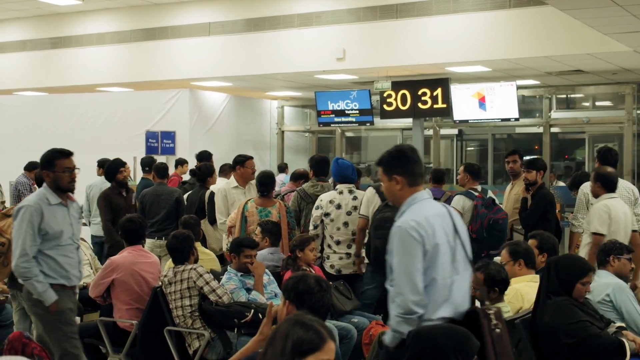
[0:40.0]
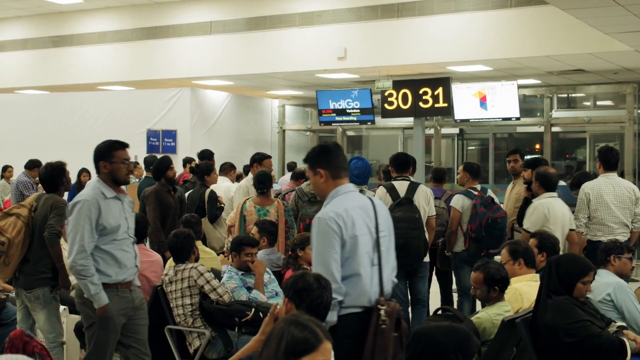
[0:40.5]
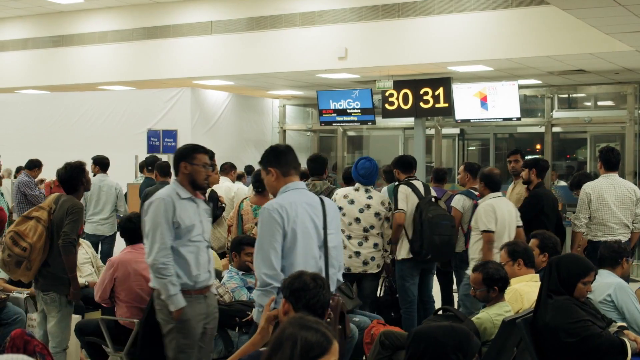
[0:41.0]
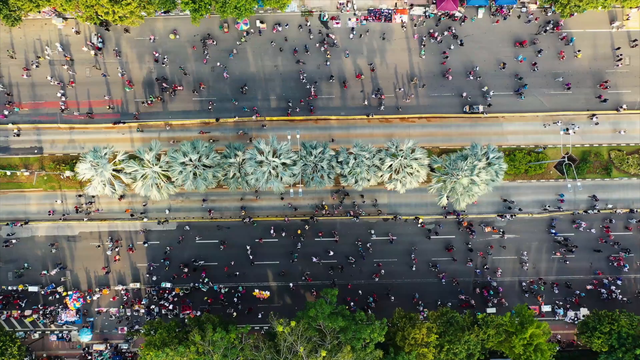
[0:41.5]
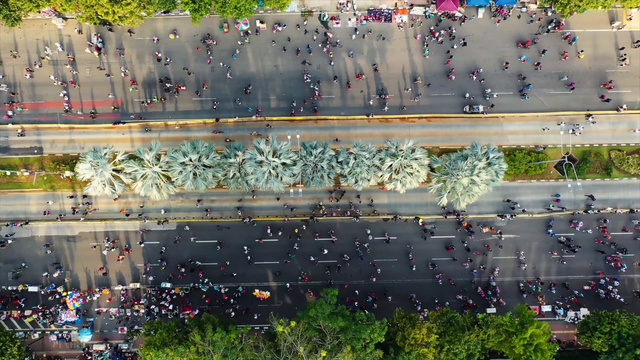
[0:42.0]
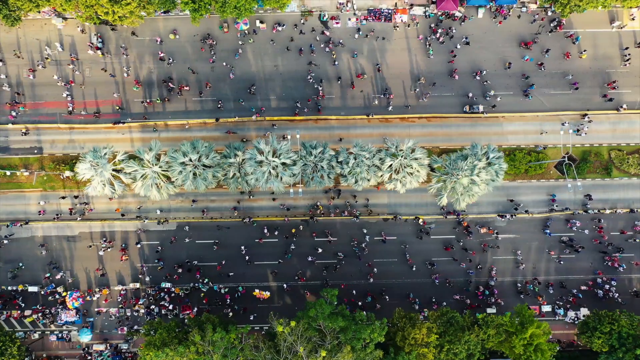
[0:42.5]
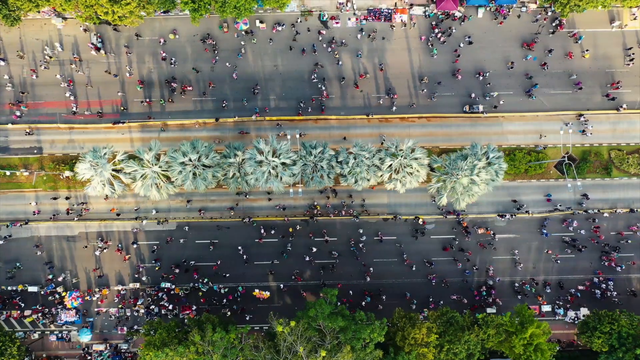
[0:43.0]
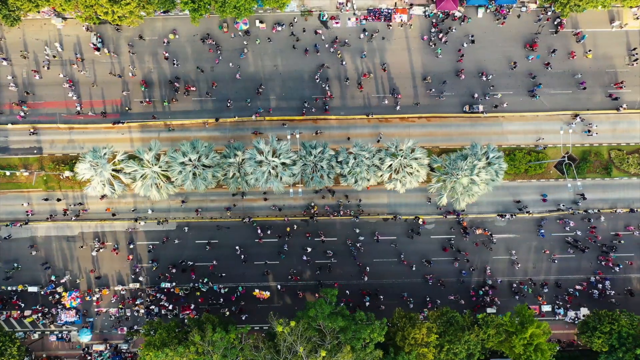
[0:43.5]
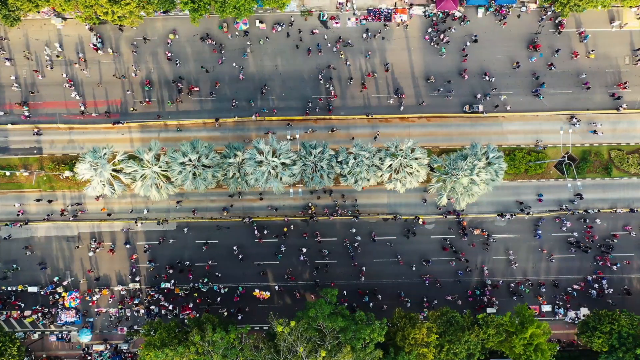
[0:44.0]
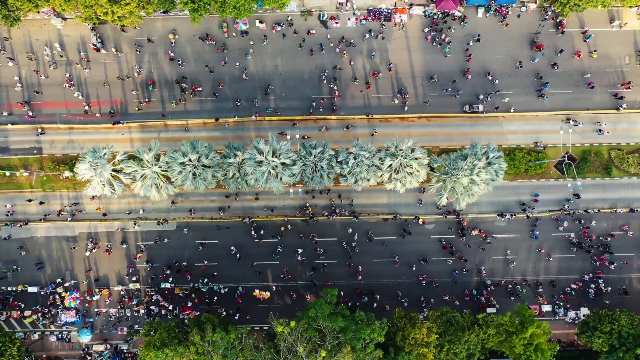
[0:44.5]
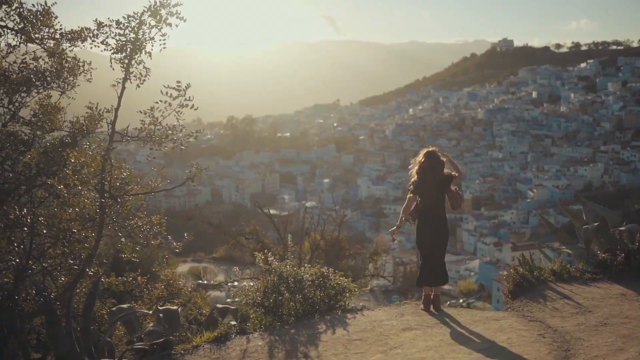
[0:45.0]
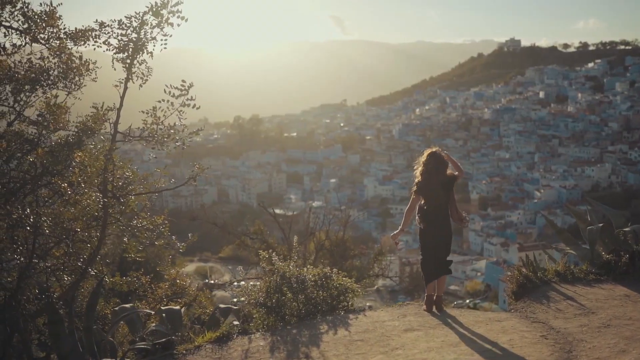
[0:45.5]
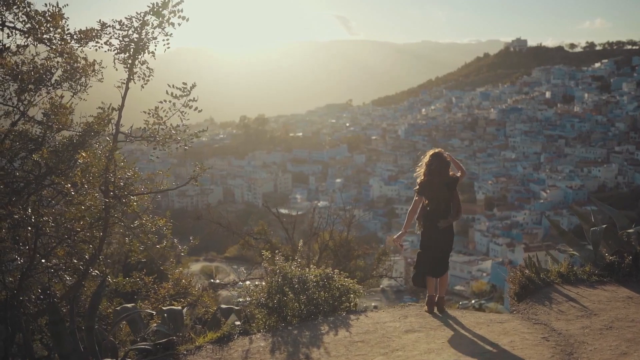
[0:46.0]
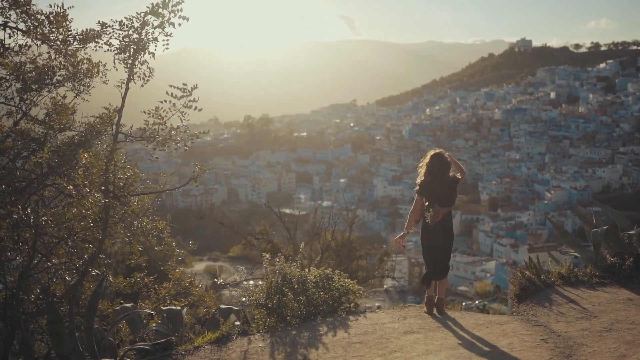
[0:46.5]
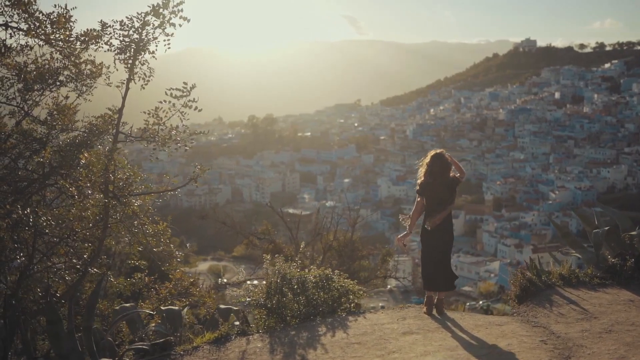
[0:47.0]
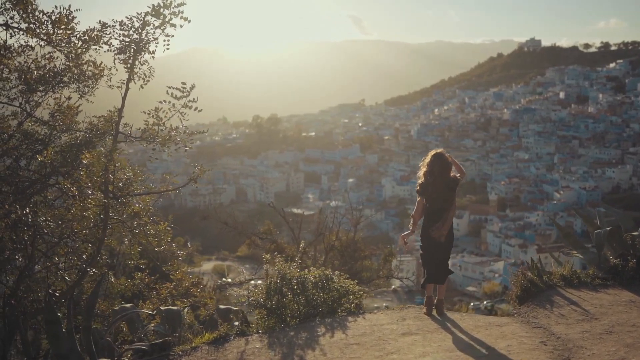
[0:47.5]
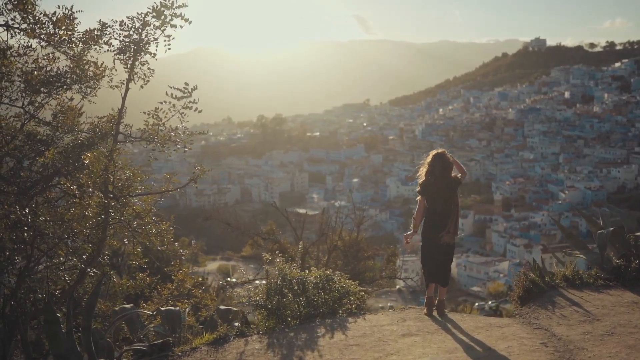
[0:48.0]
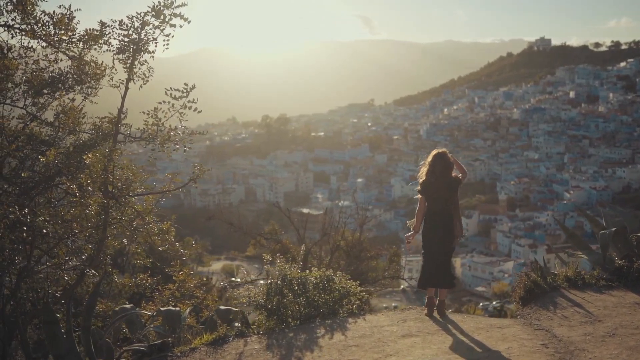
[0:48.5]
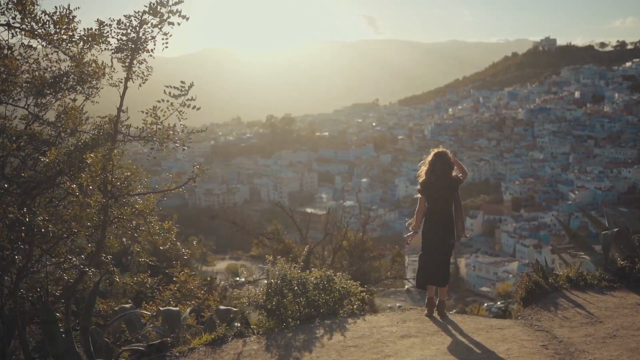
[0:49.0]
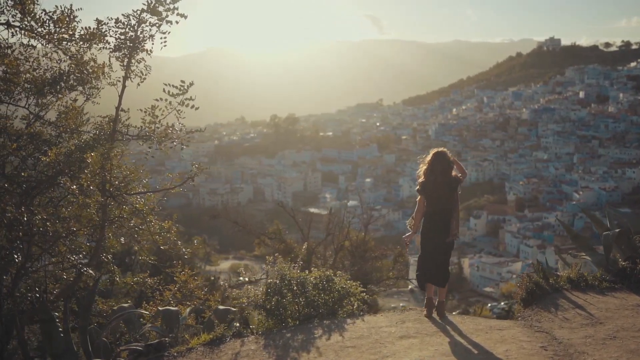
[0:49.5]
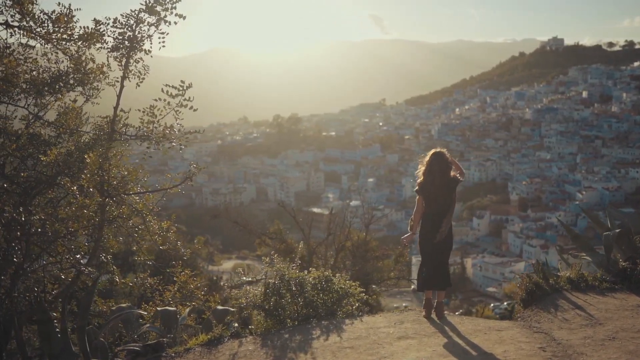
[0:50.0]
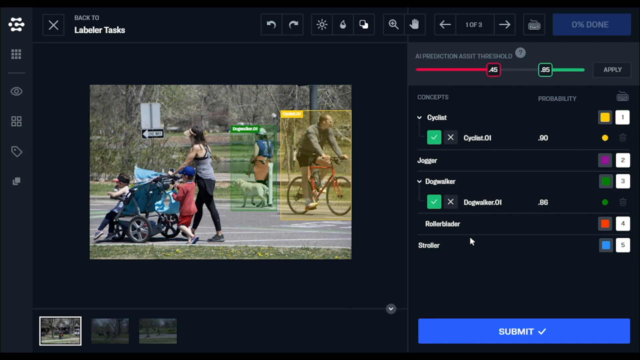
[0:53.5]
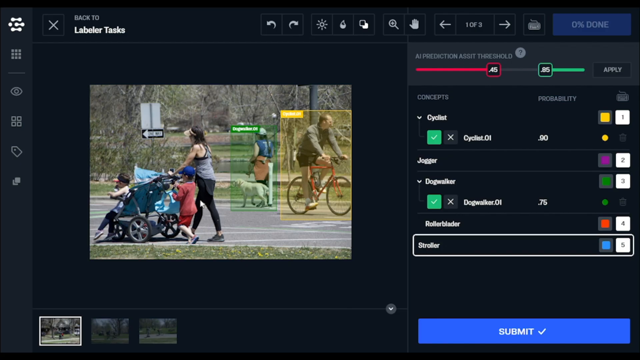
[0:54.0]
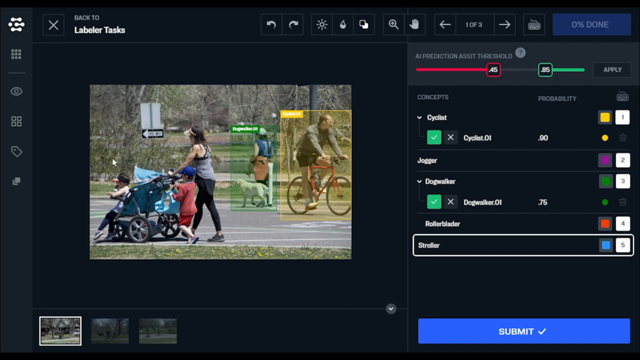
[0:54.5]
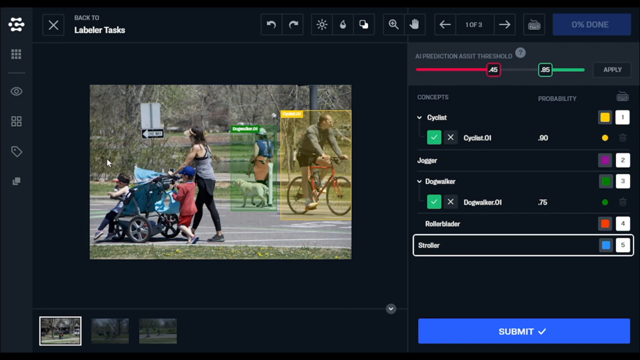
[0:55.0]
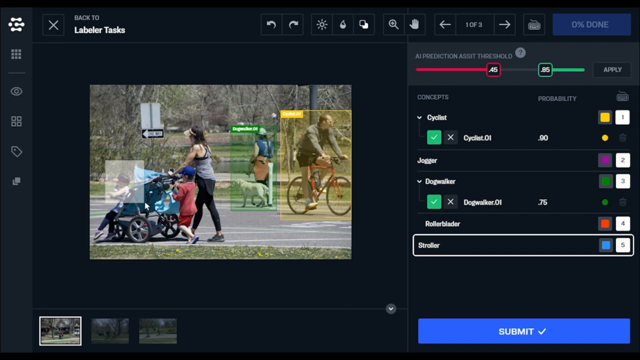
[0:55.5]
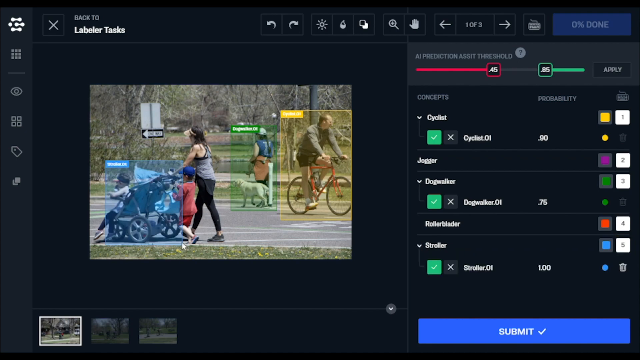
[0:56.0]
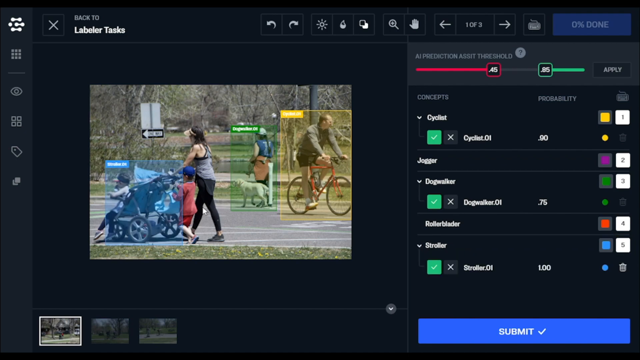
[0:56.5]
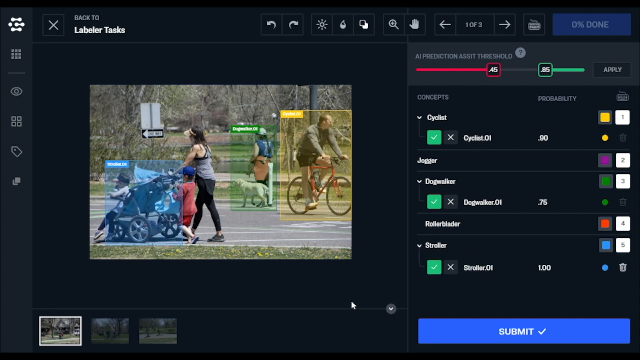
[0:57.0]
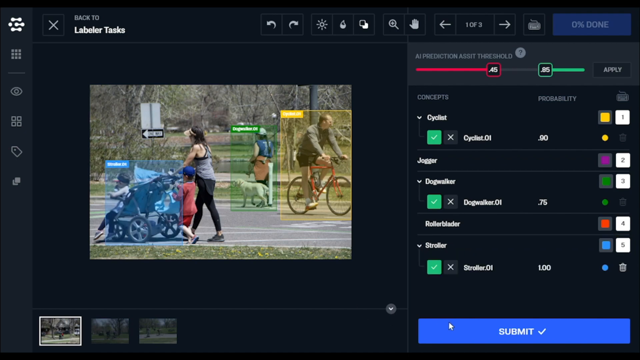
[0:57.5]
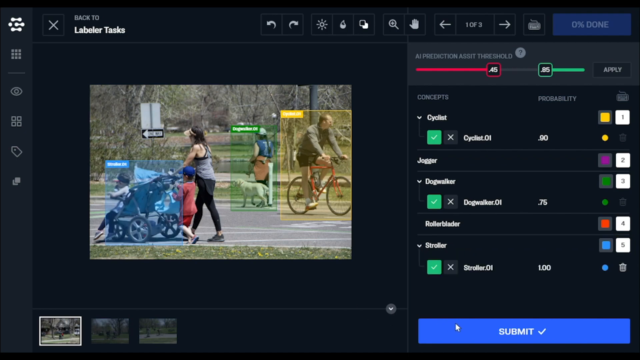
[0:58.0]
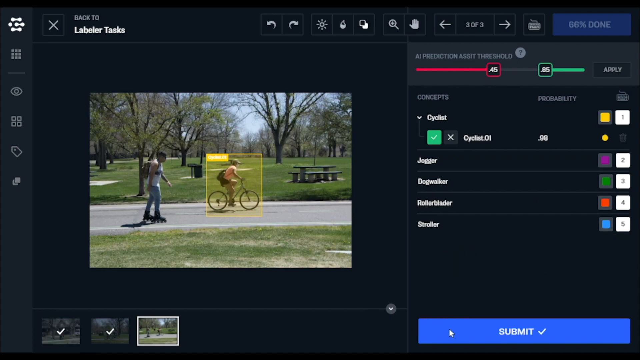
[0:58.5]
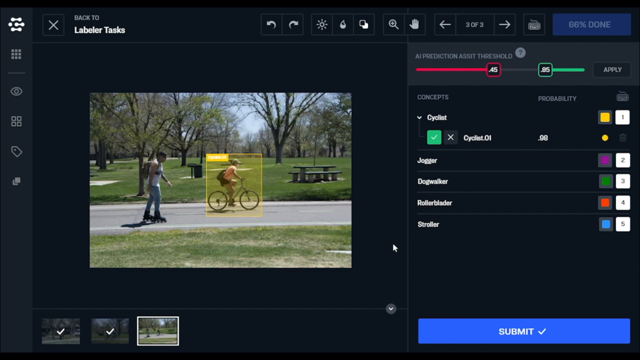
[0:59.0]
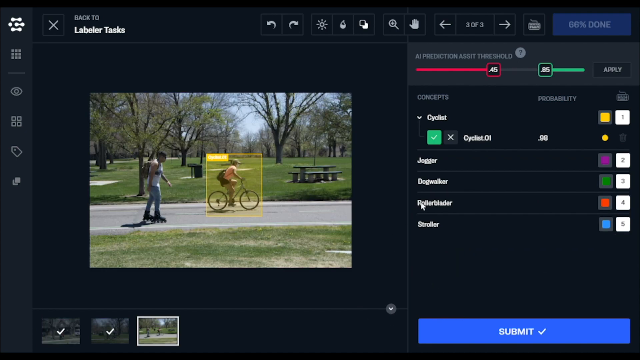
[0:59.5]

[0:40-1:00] Inside an airport, people are sitting, waiting or walking, and some are looking at the signs. An aerial shot follows of a large road with trees in the centre; people are walking on the road and some are cycling, and there is no traffic. Next, a woman stands on a hillside looking out at the view below, a valley with lots of white housing that goes up the neighbouring hillside. There is a tree in the foreground, and her dress and scarf move in the wind. The screen goes black, and then a Labeler Tasks interface appears, where a mouse moves across an image of people in a park and drags a box over the pushchair. Other boxes are over a woman with a dog and a man on a bike. The mouse moves to the submit button, and another scene appears of a person riding a bike in the park, highlighted in a yellow box.